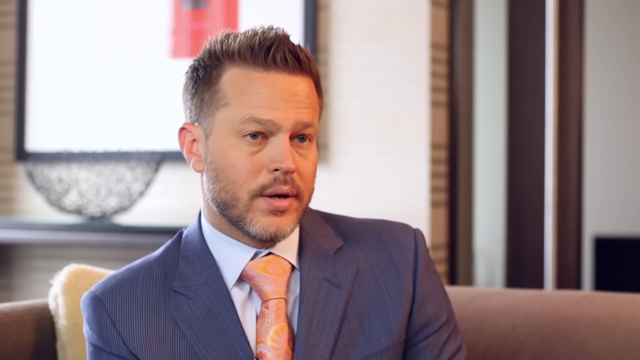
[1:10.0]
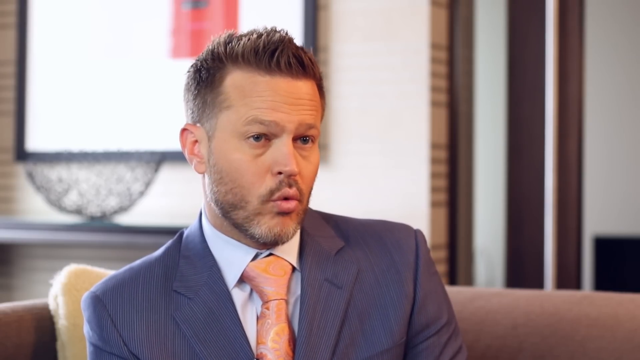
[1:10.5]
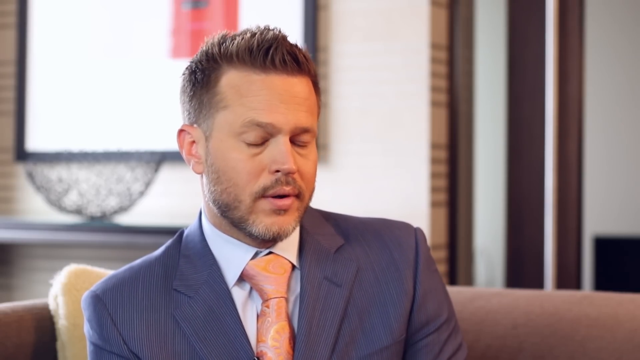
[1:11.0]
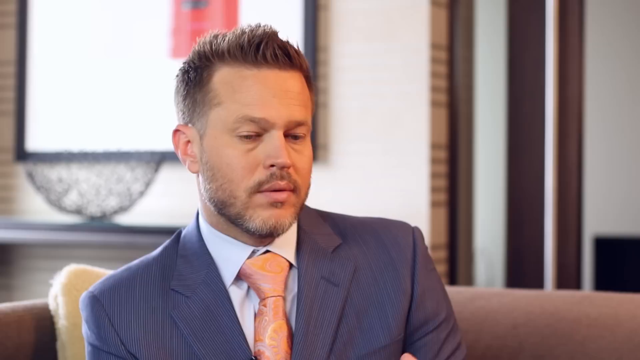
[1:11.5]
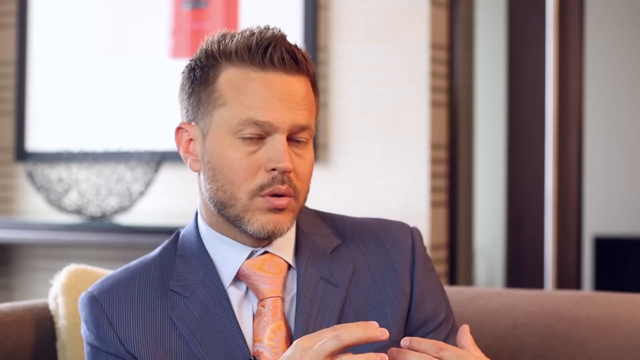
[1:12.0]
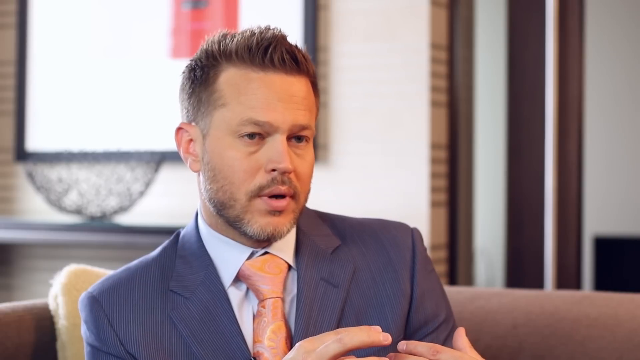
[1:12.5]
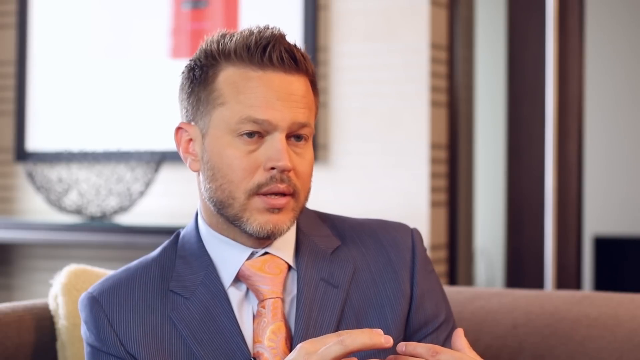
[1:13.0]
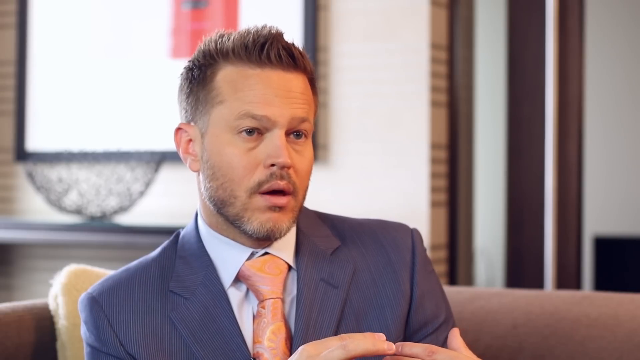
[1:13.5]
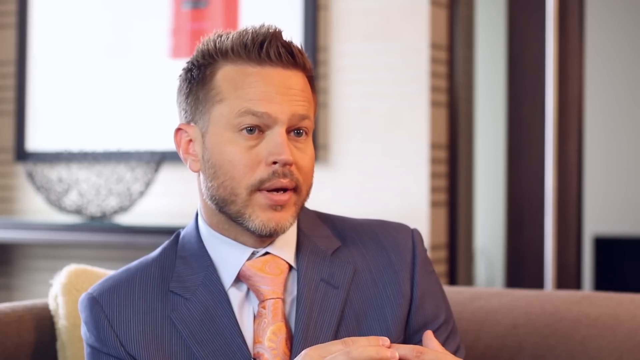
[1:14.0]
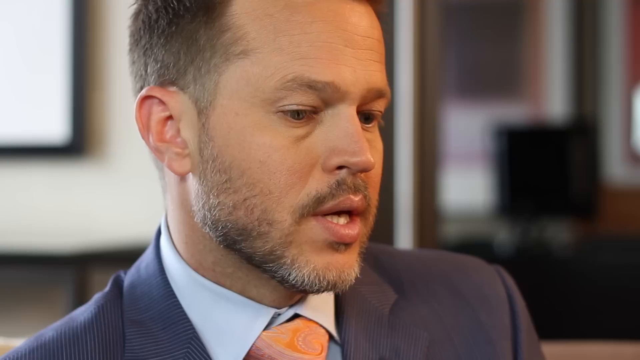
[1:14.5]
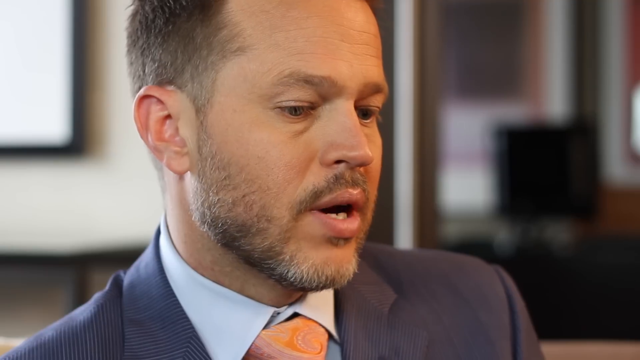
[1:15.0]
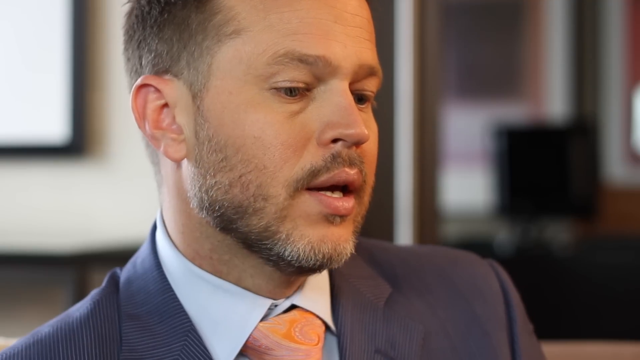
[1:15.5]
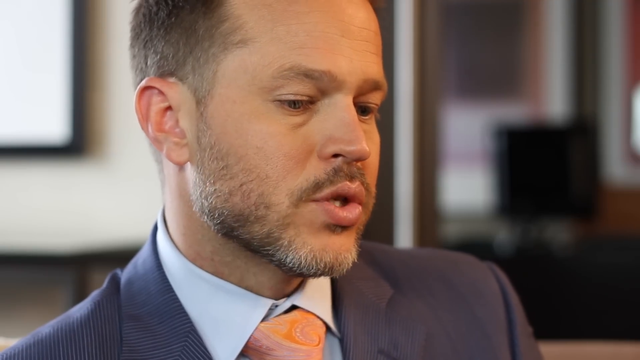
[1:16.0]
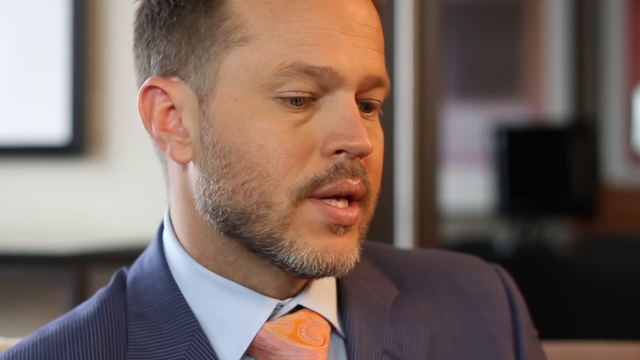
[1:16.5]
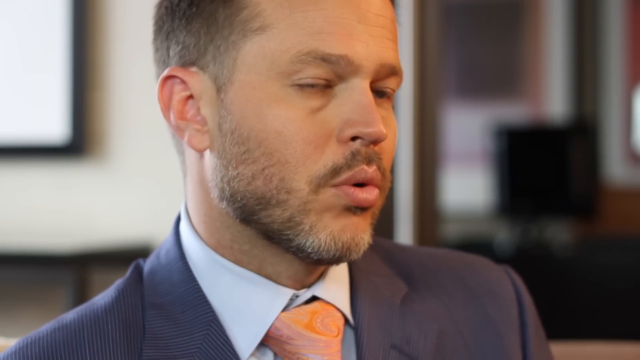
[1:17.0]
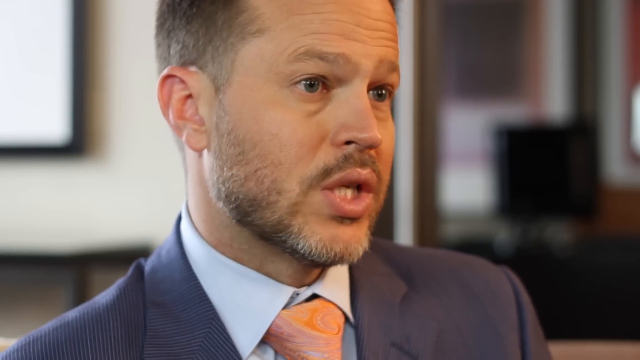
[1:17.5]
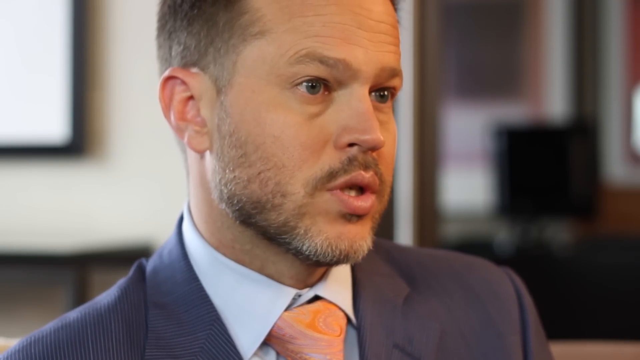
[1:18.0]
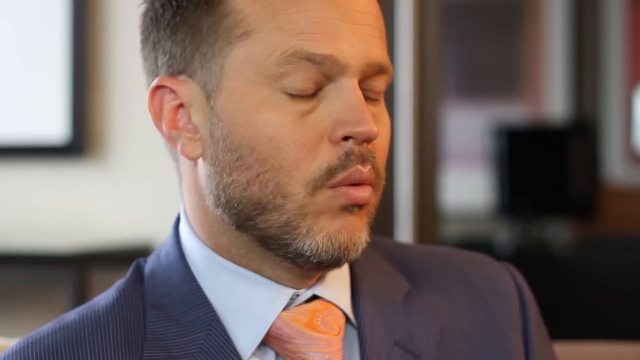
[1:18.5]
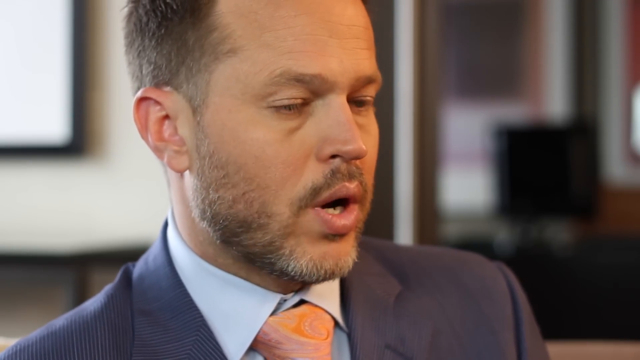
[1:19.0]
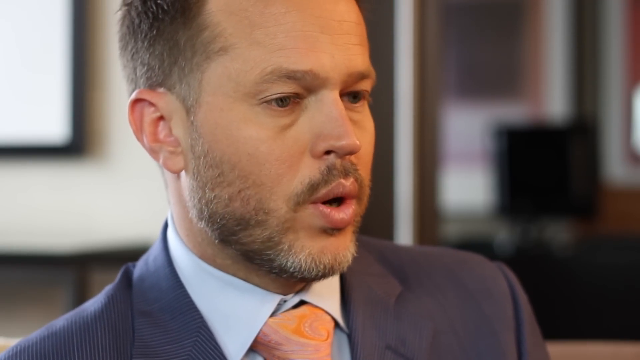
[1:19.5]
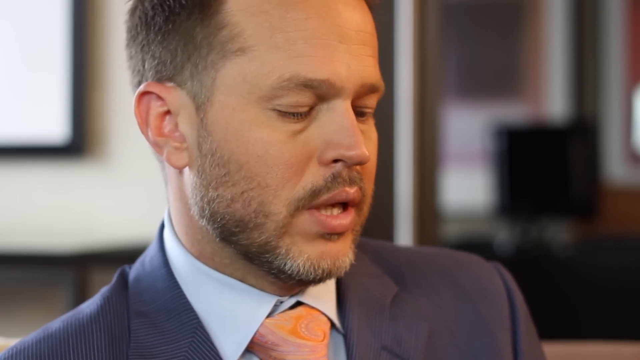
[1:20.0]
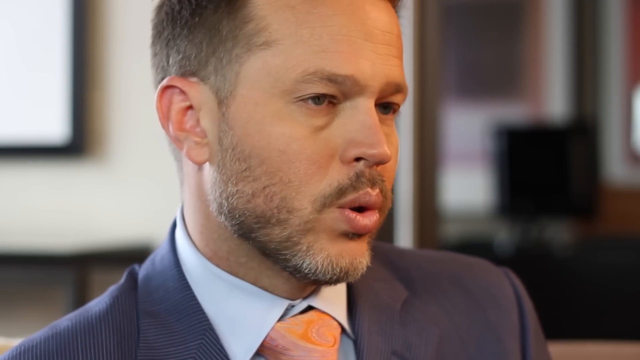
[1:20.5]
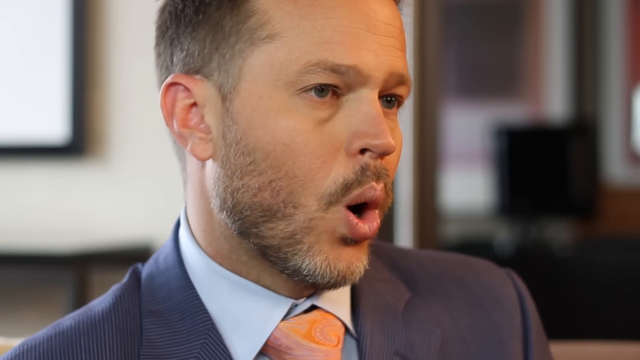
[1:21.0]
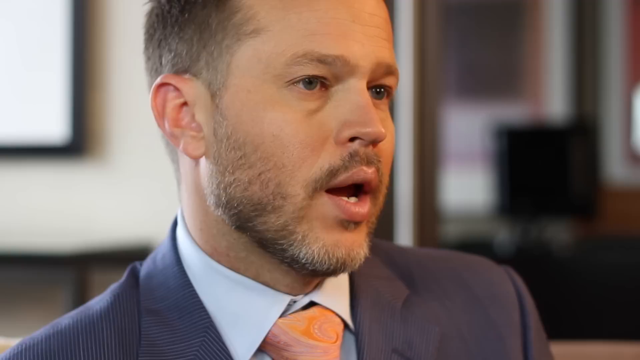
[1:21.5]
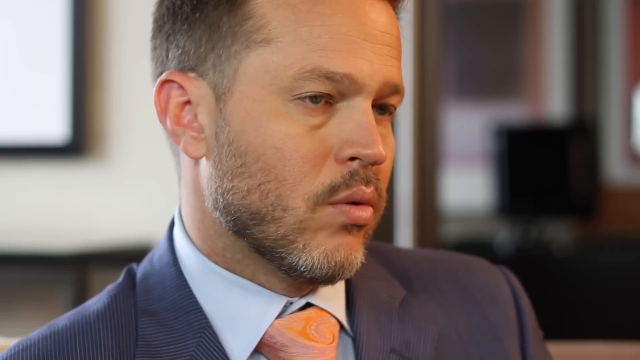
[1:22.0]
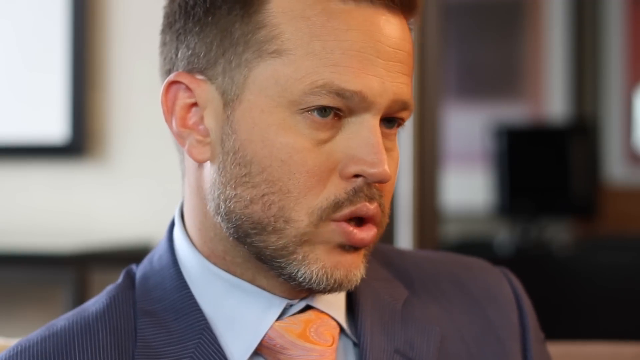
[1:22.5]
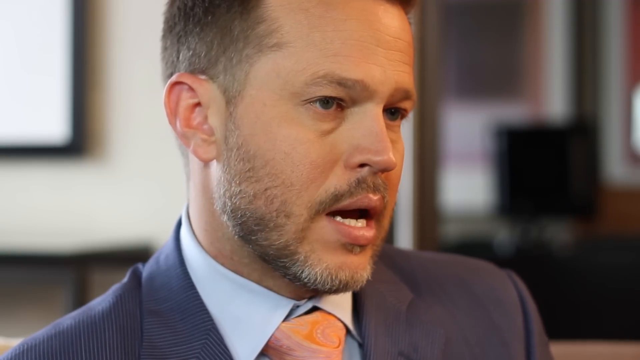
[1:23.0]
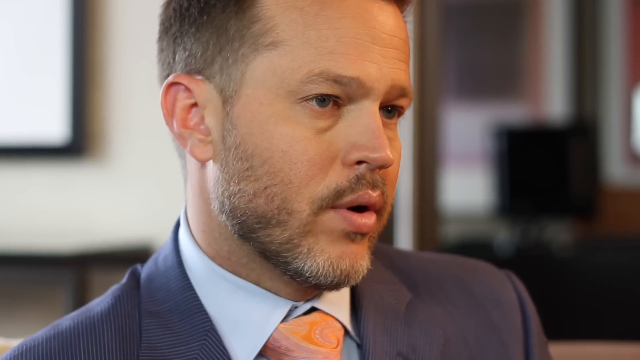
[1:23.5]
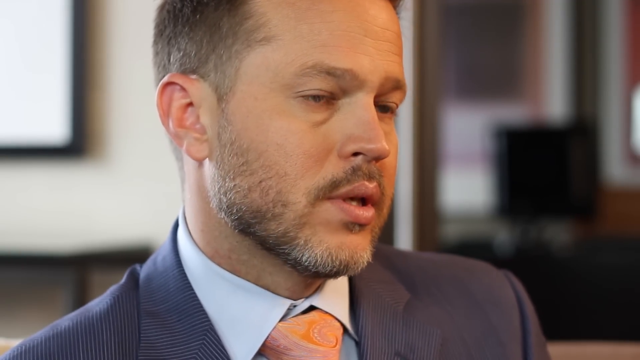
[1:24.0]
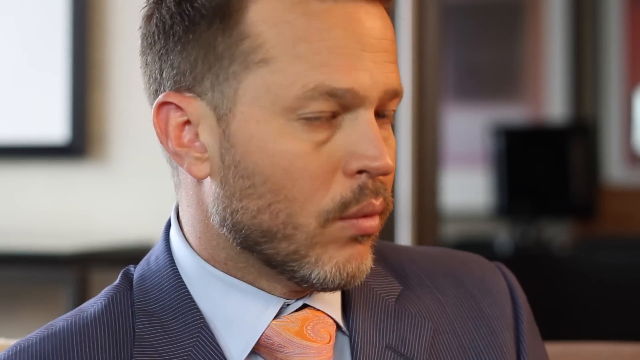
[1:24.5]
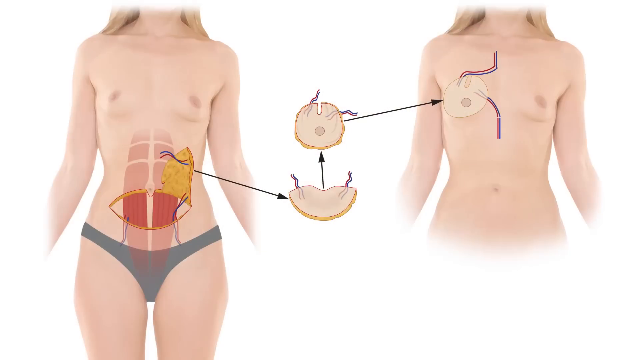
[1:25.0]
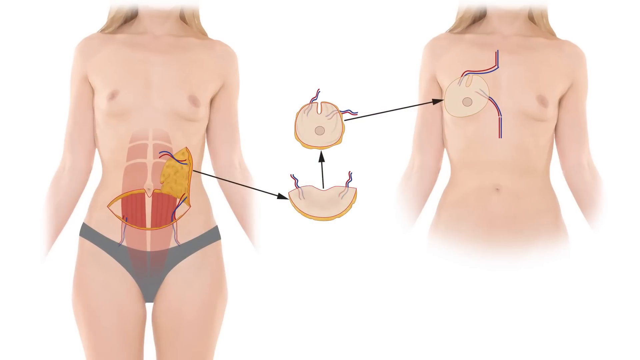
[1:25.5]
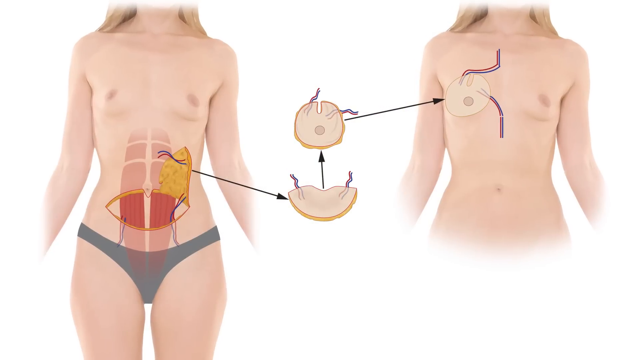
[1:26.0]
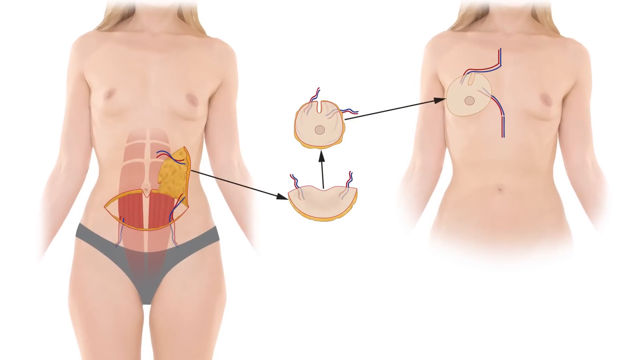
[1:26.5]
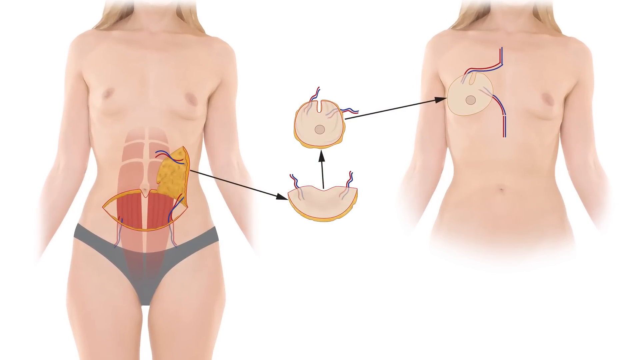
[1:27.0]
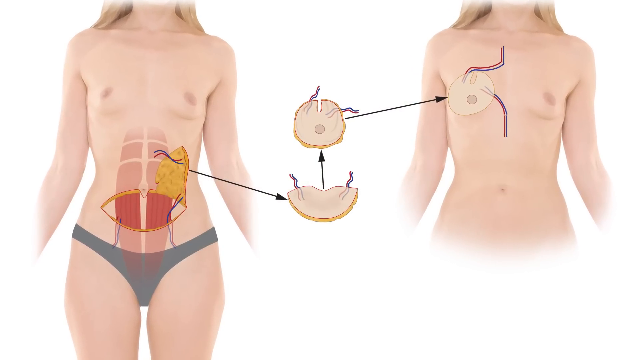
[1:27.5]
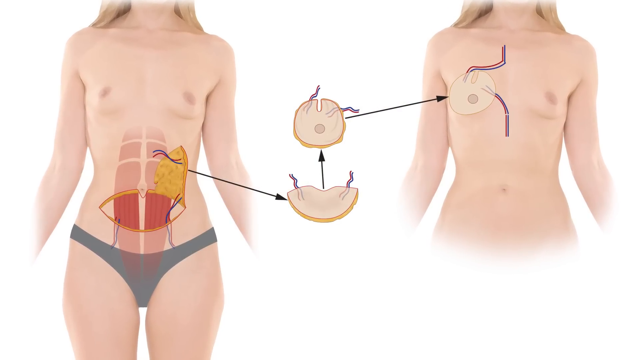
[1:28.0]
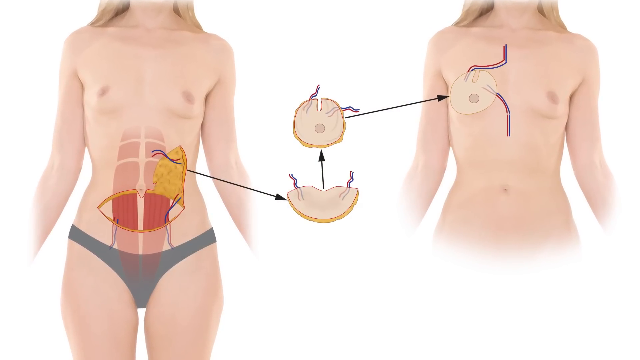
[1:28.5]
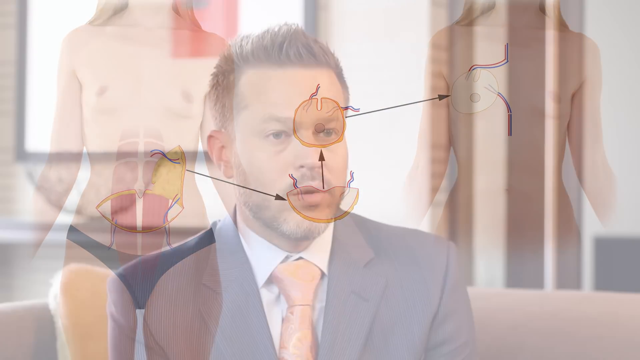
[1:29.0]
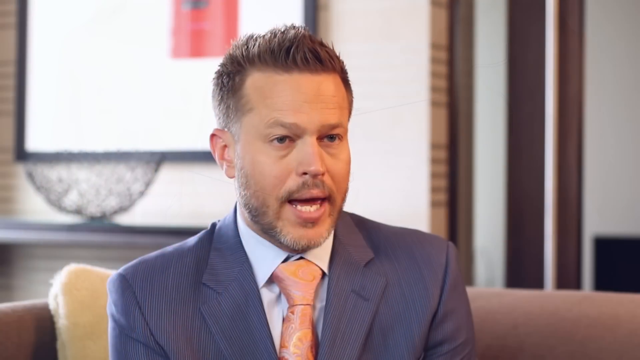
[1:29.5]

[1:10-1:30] An early middle-aged Caucasian male doctor faces the camera but looks somewhat to the right. He wears a charcoal gray pinstripe suit, a light gray button-up shirt and a light orange tie. He has a short trimmed beard and mustache that is graying somewhat, short dirty blonde or light brown hair, blue eyes, and bags under both eyes that make him look tired. He holds his hand up in front of him as he talks, gesturing with his hands. The shot changes to a close-up of the doctor, still speaking but facing right, looking at someone off-camera to the right. The video then changes to a graphic showing two front views of a female body: the one on the left is more complete, showing from the neck down to the upper thighs, and the one on the right shows from midway down the neck to the upper hips. The graphic focuses primarily on the breasts and shows different avenues, apparently those by which the cancer can spread when it metastasizes.